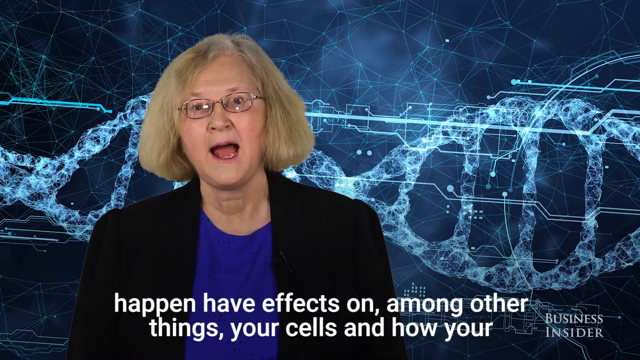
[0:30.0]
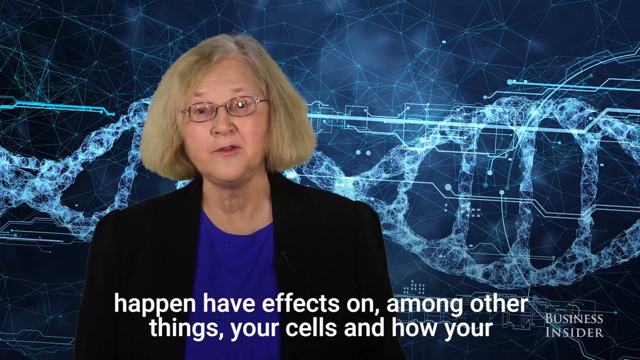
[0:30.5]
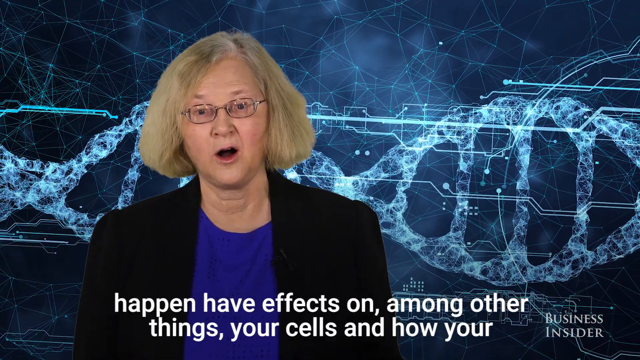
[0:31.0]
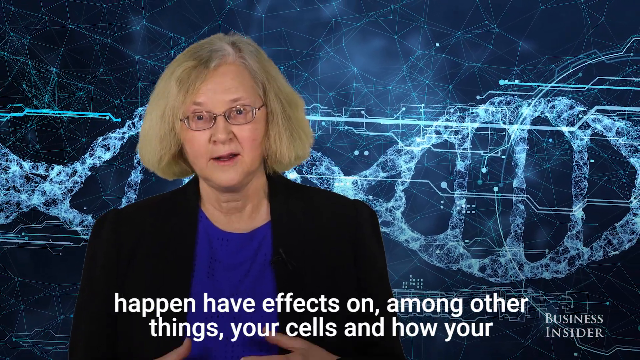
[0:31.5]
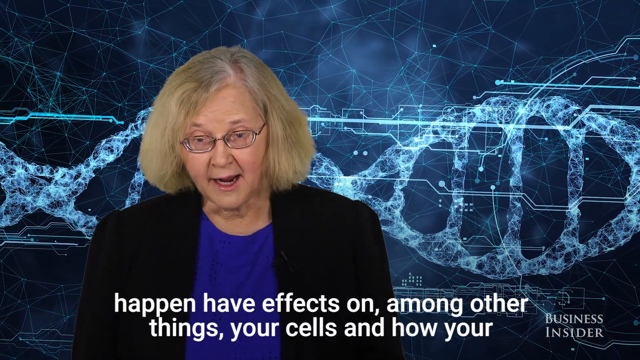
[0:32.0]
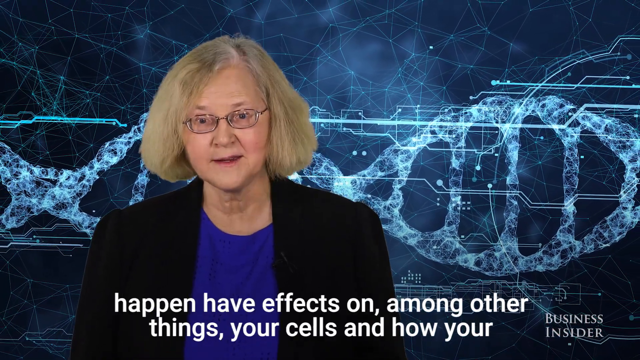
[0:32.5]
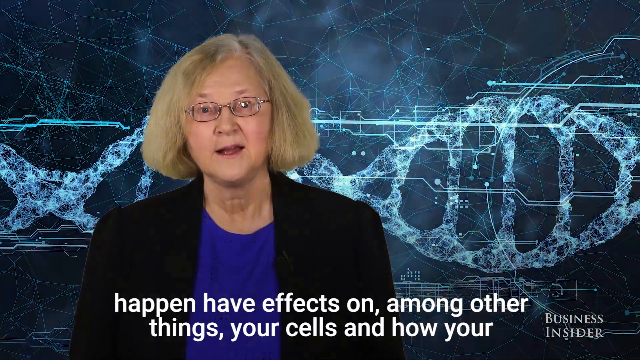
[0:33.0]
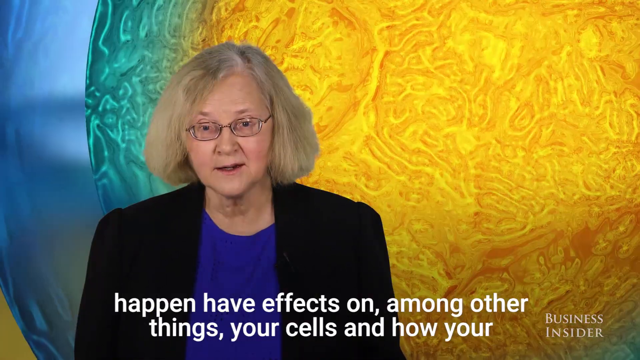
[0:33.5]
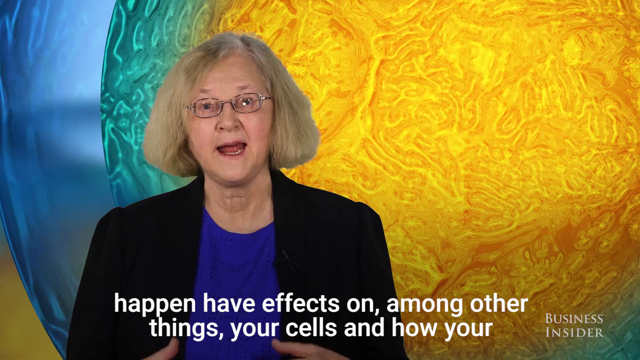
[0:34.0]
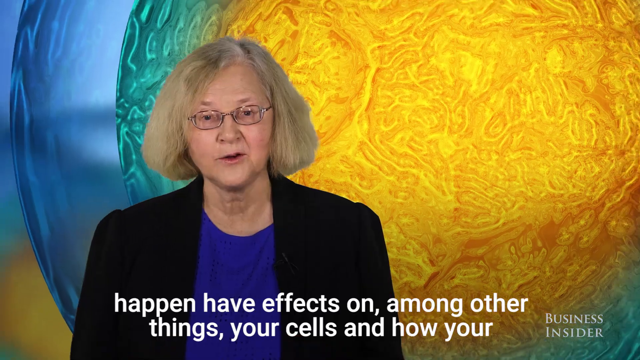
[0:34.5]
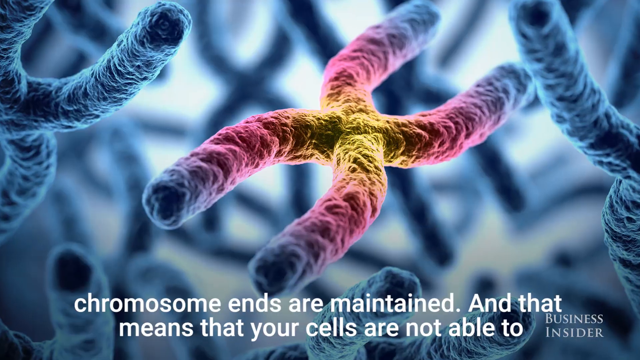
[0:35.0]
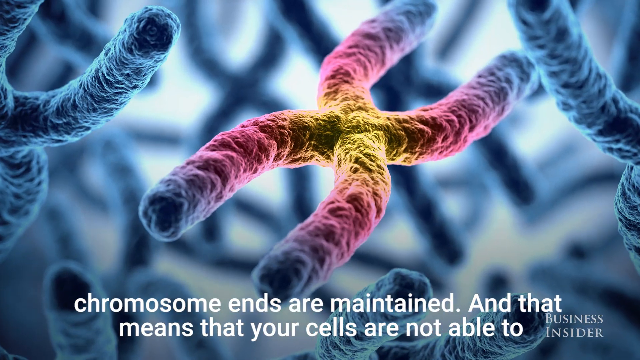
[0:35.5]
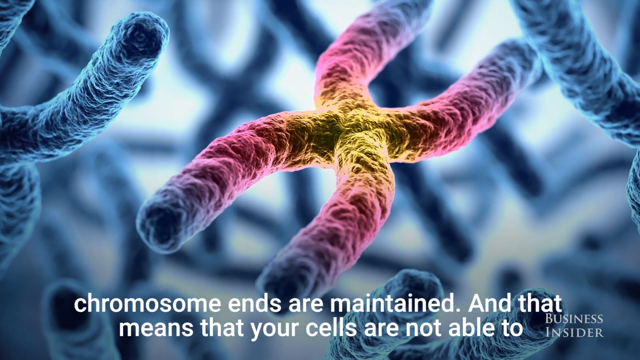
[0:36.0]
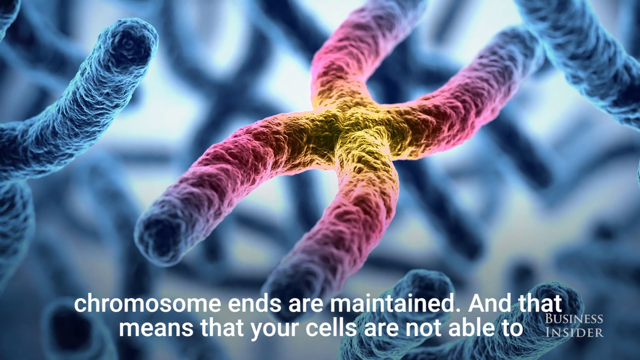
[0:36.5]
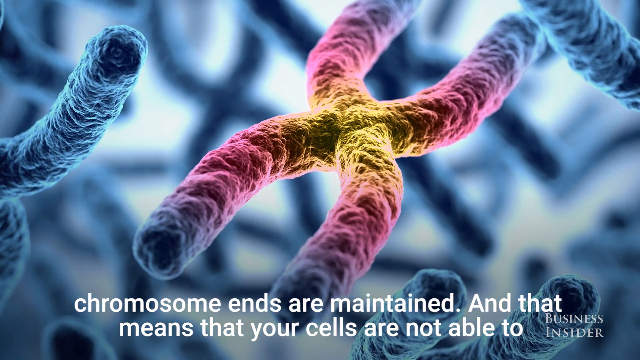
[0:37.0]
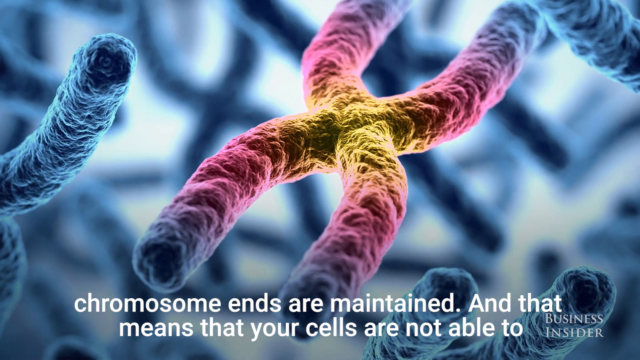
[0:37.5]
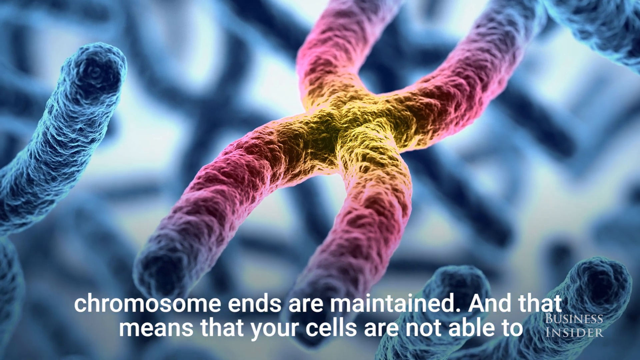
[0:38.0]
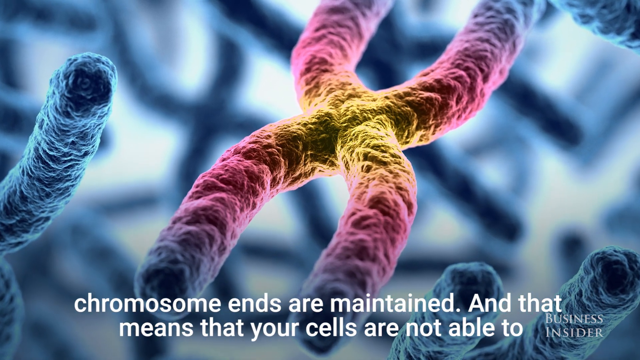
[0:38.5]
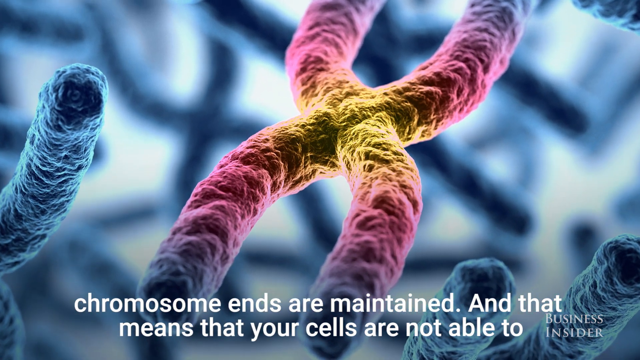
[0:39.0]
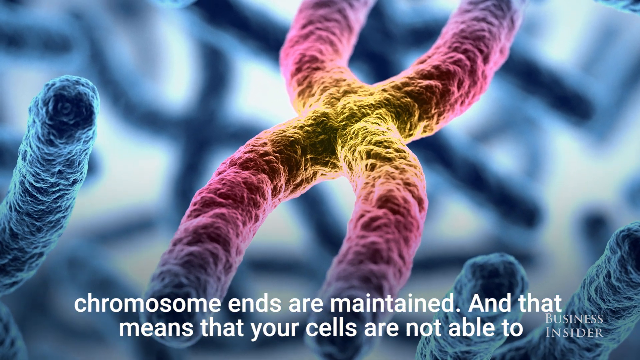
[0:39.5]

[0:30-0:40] The blonde woman with small eyeglasses, a blue shirt and a black jacket stands facing the camera and talks. Behind her, an image of a mitochondrial DNA strand in blue and white runs across the backboard. The caption reads, "happen, have effects on, among other things, your cells and how your chromosome ends are maintained. And that means your cells are not able to." The image on the screen changes to an illustration of mitochondrial DNA: X-shaped chromosomes rendered in blue, with one in the front rendered in pink and gold. At the end it flashes to a picture of a single cell in blue and gold.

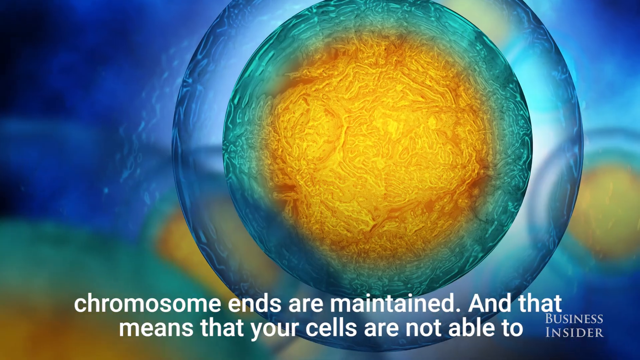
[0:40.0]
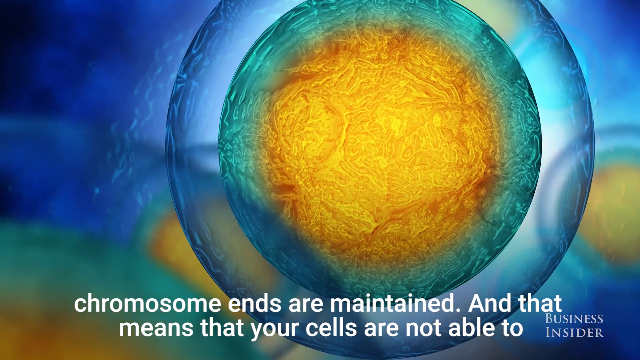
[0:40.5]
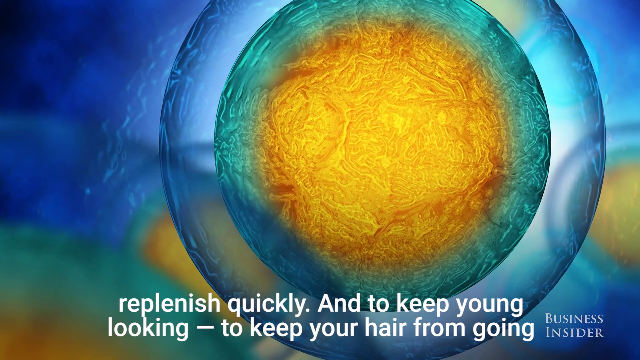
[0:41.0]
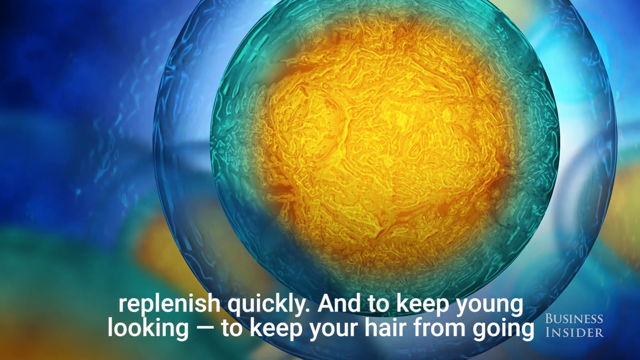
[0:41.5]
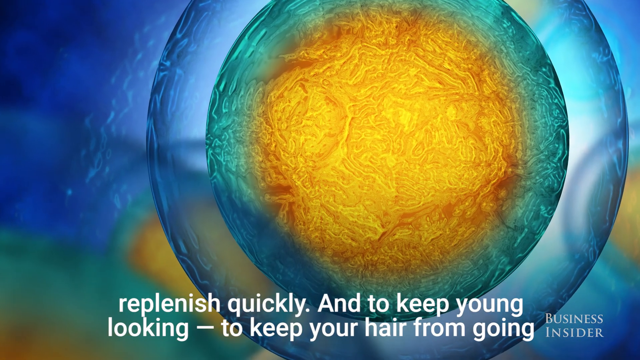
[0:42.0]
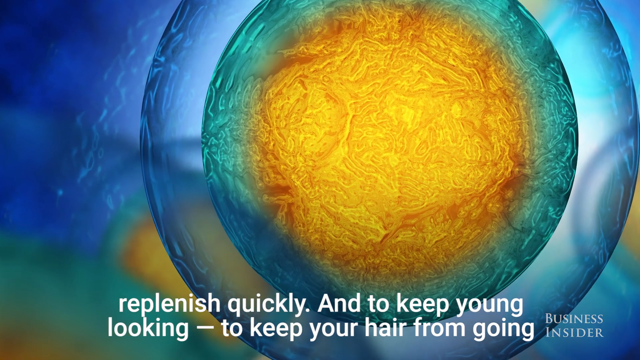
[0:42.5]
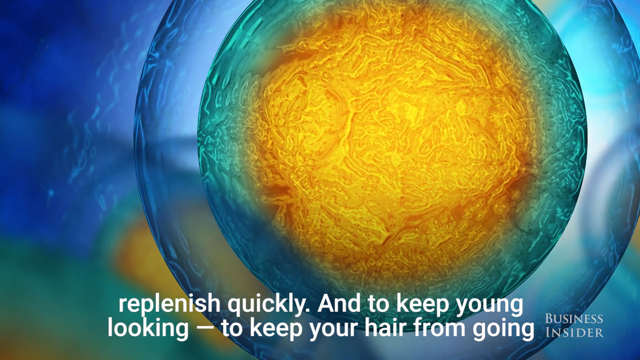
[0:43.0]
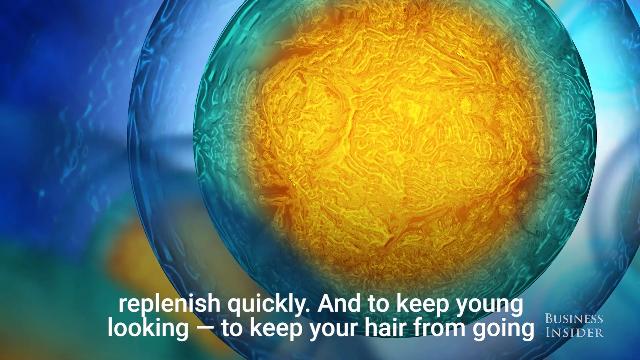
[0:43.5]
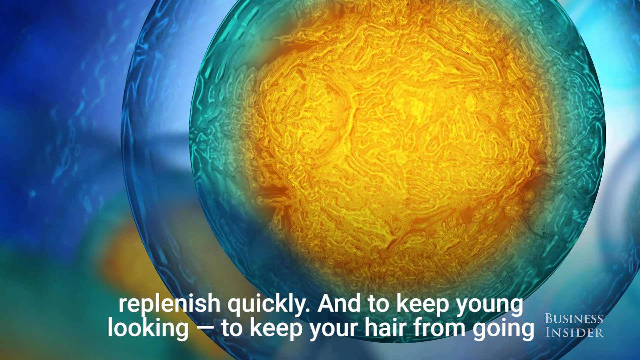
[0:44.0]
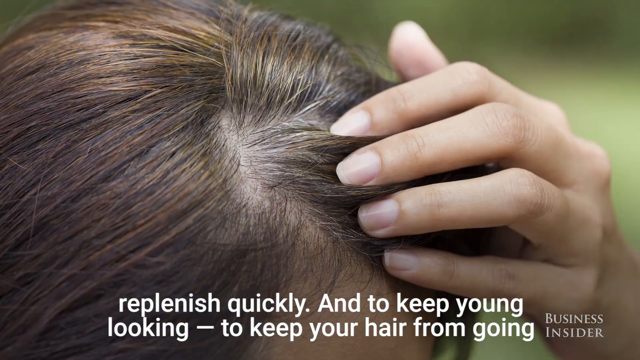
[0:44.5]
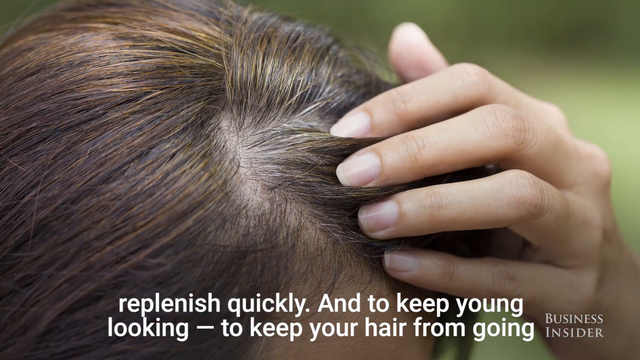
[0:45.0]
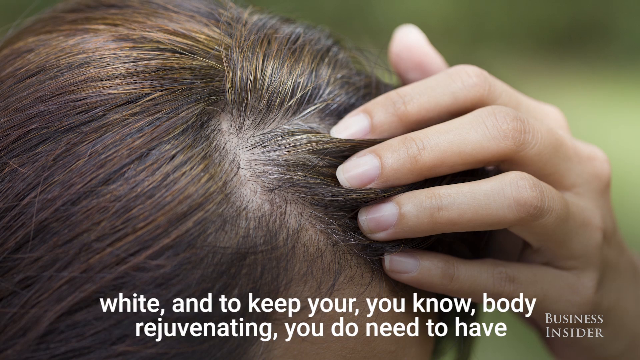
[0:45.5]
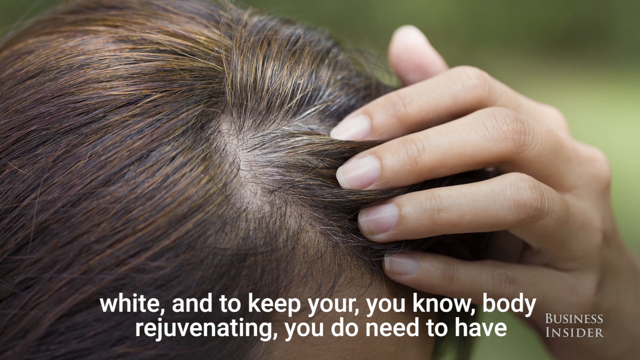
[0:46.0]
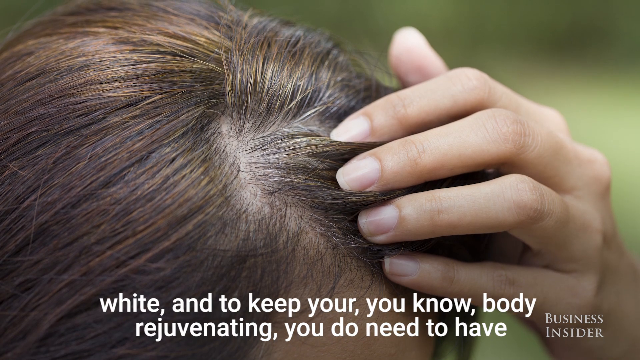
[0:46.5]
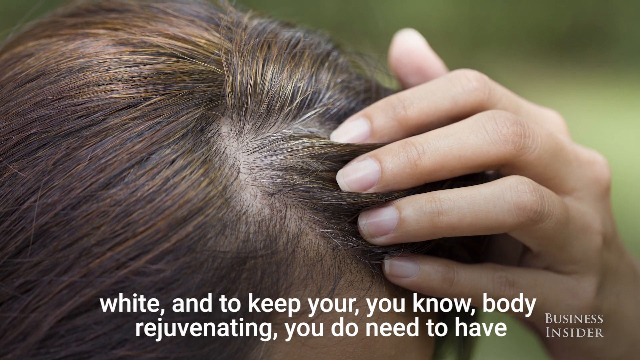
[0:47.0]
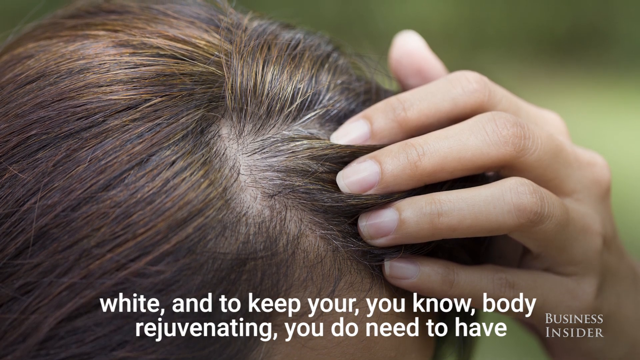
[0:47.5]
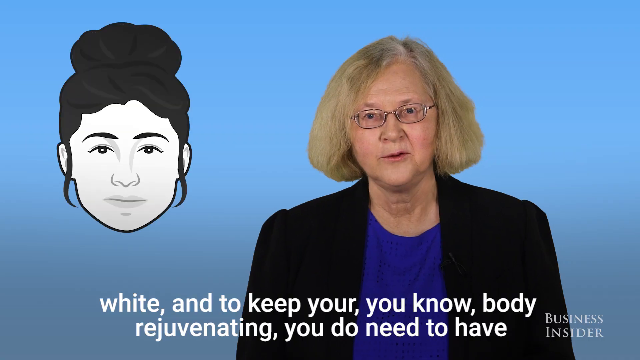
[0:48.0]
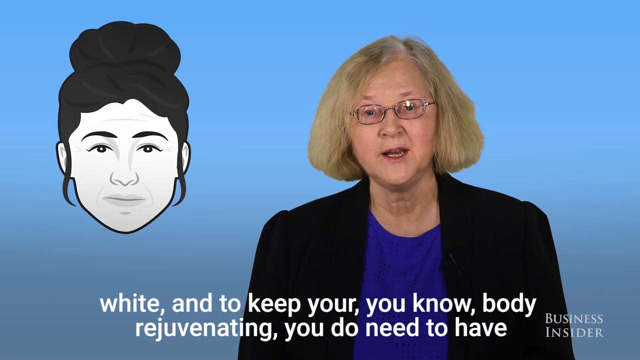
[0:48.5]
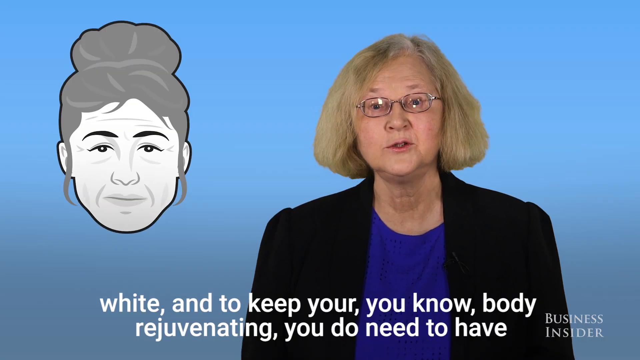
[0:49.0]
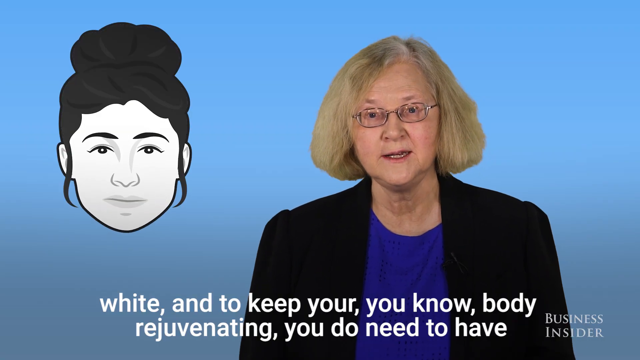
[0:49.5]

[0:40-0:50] An image that looks like a microscopic slide of a DNA cell is shown. It is circular with rings within it; the outside of the cell is ocean blue, the inside is turquoise, and the very center is gold. The caption reads, "Chromosome ends are maintained. And that means that your cells cannot replenish quickly. And to keep young looking, to keep your hair from going white," as the picture changes to an image of a woman's scalp with brown hair that is gray at the roots; she pulls her hair with her left hand. The caption continues, "And to keep your body rejuvenating, you do need to have cells." The image then returns to the woman speaking, and behind her flashes a series of illustrations of other women with various shades of dark and gray hair.